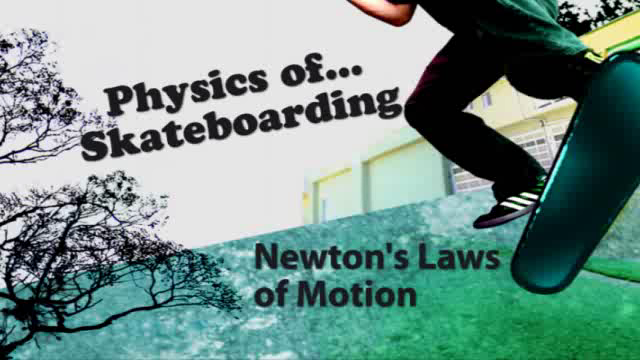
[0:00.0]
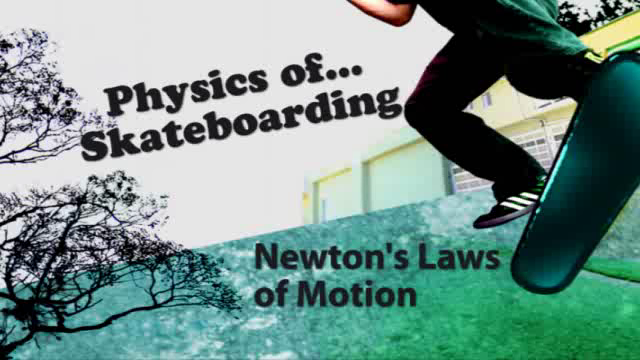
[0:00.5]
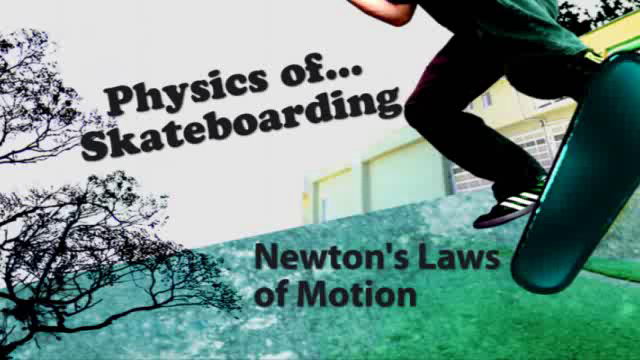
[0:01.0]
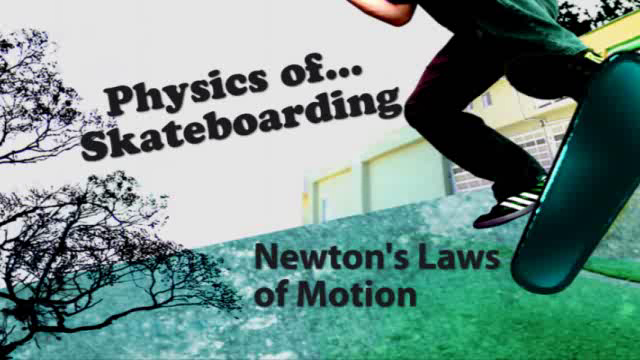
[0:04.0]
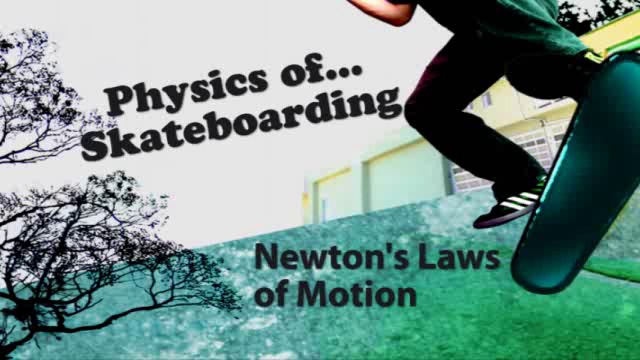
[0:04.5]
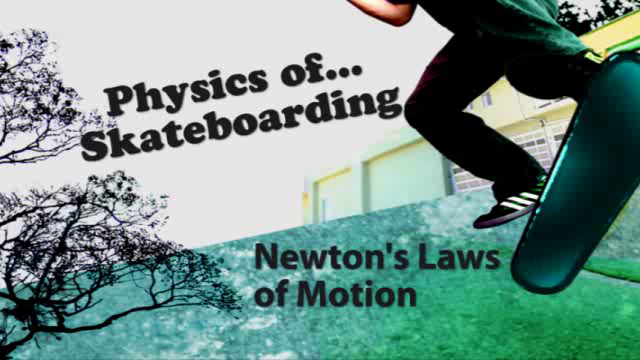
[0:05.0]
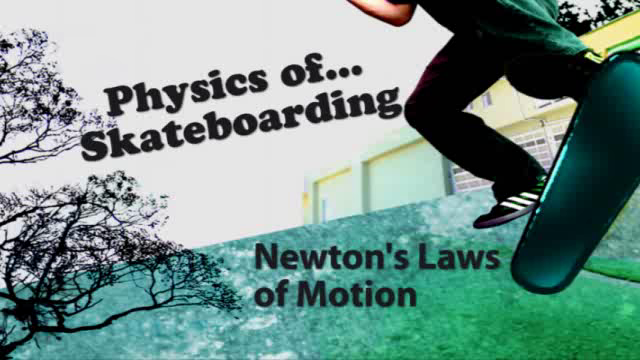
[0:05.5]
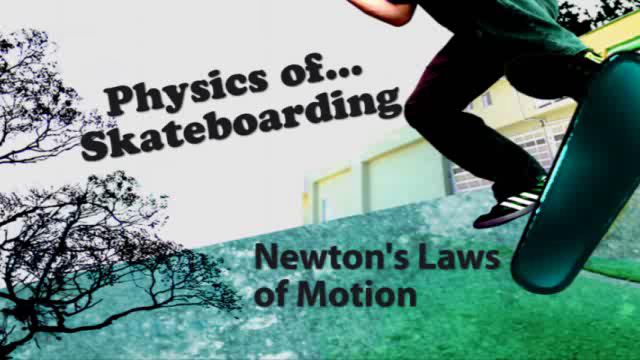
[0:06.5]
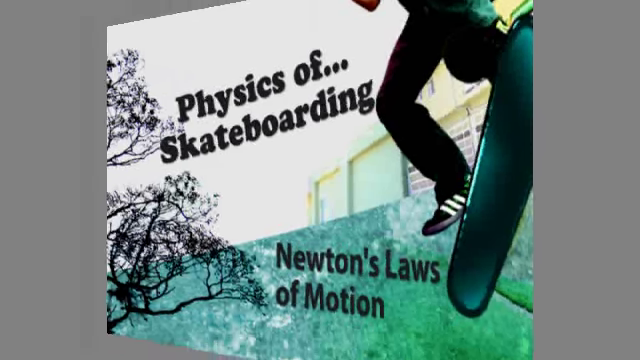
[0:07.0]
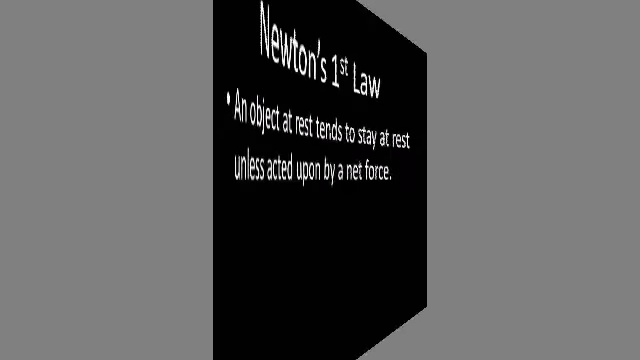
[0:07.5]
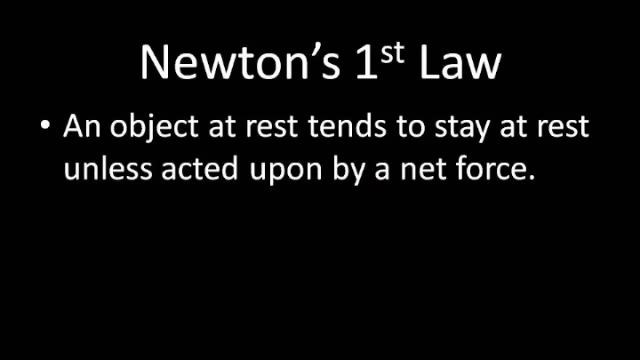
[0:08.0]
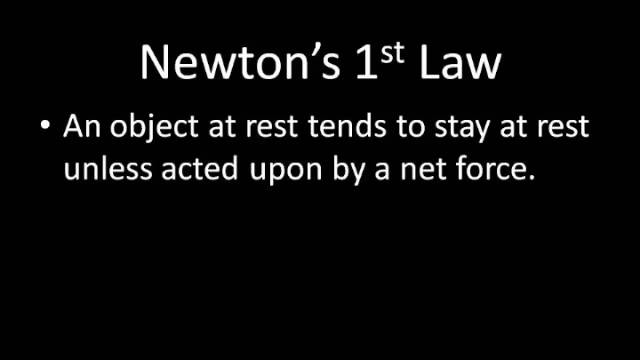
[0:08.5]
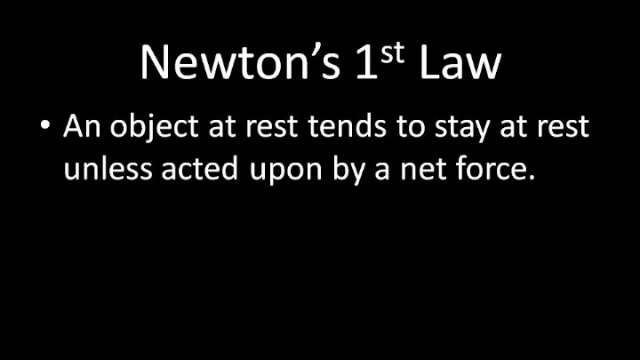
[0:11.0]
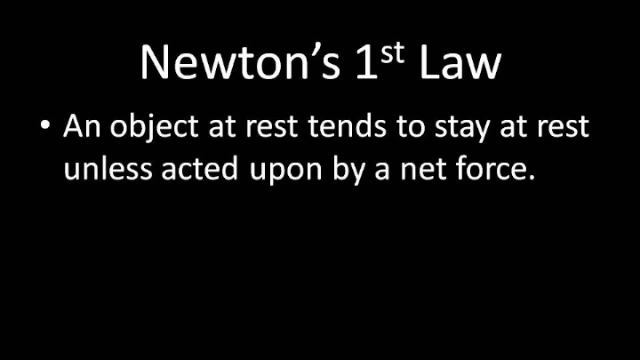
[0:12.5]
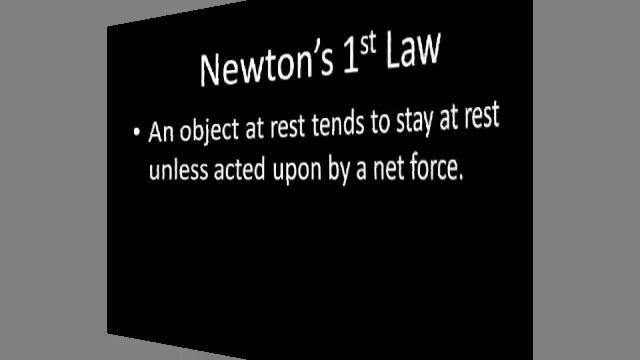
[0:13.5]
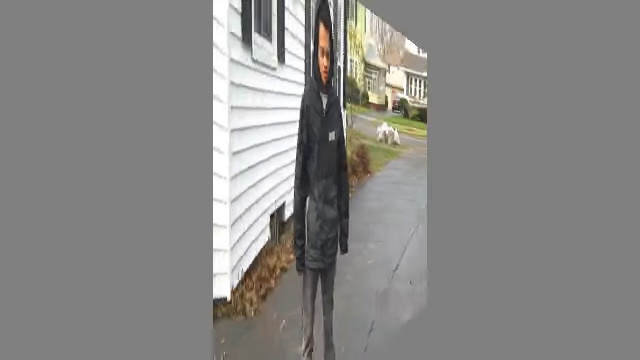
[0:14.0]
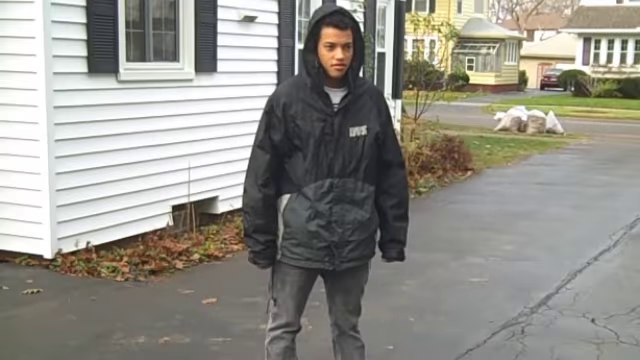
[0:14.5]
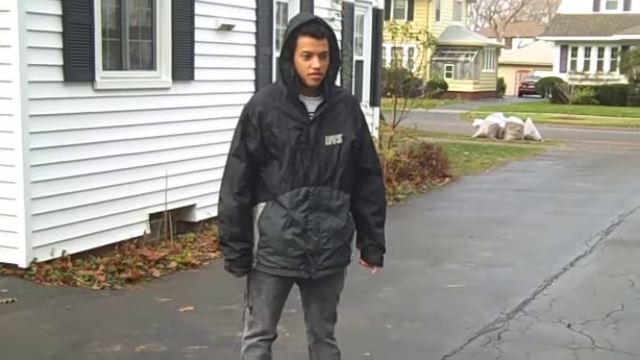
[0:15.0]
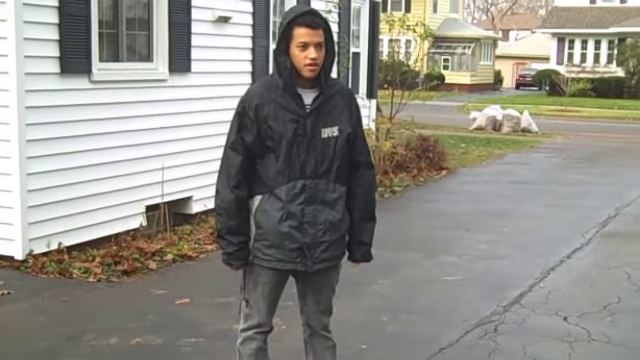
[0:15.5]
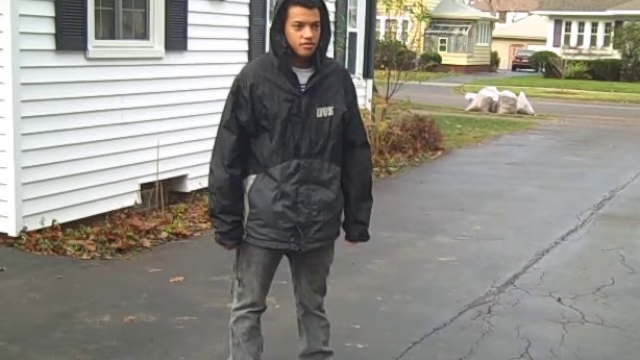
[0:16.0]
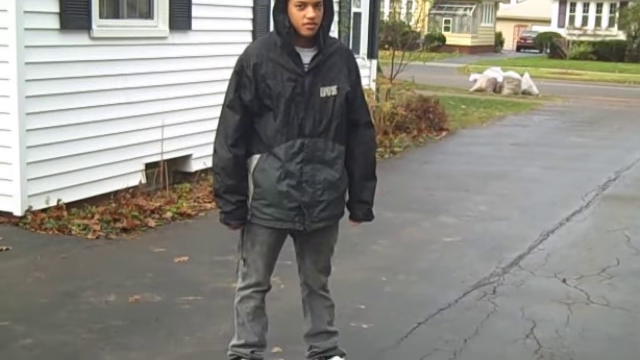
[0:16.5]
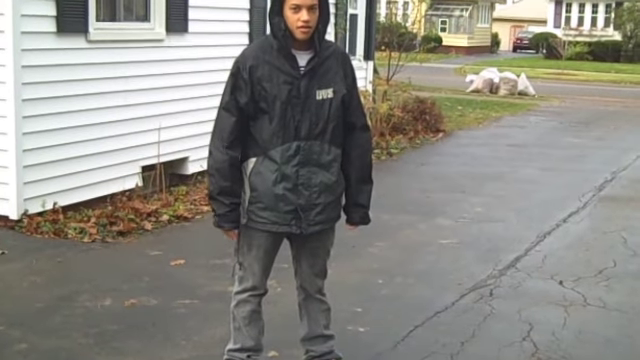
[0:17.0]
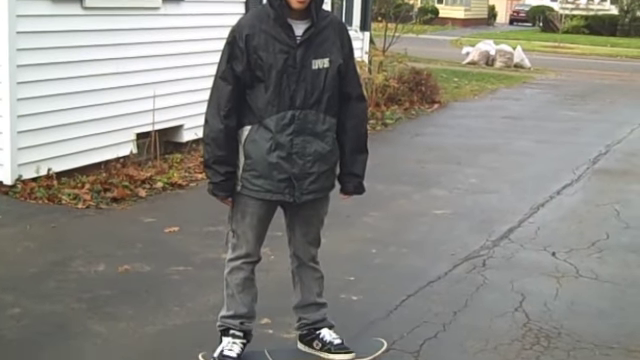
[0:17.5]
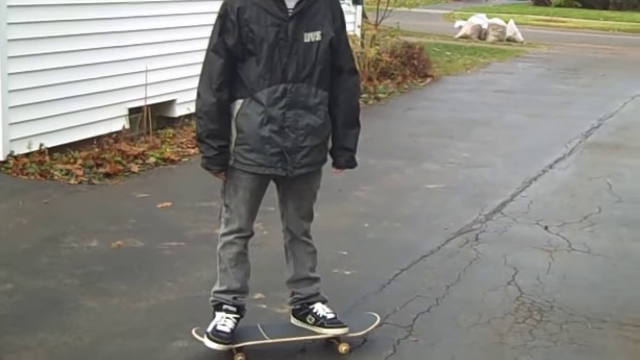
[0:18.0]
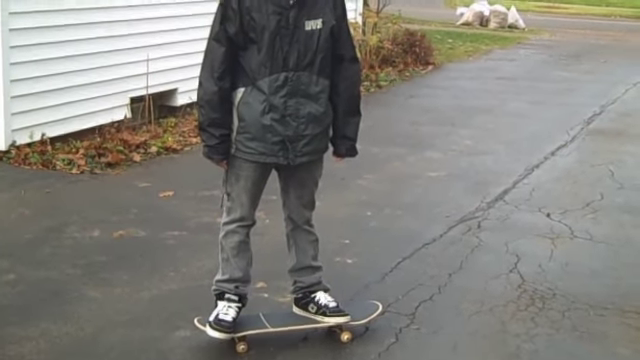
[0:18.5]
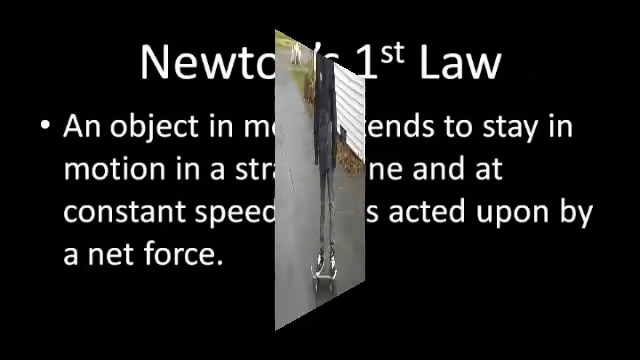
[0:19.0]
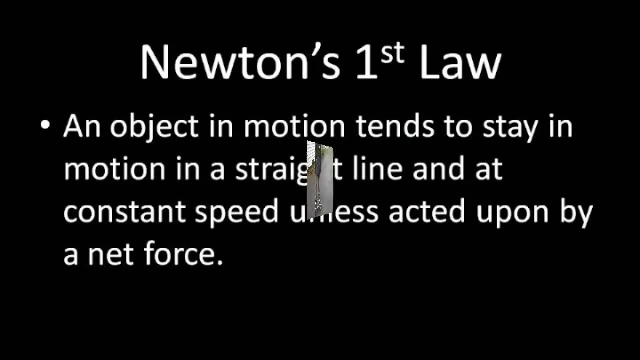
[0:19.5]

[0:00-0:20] The video opens on a blurry, animated-looking image of a guy who is partly out of view. He wears Adidas shoes, his right foot is forward and his left foot back, and he looks like he is doing some kind of flip. The skateboard is a darker teal, and a bit of his arm, part of his elbow, is visible. Behind him is a yellow house with a double garage, and to the left are two stacks of trees or branches that look like black silhouettes. Underneath, text reads "Newton's Laws of Motion." The scene changes to a black screen with Newton's first law in the center and a bullet point in white text: "an object that rests tends to stay at rest unless acted upon by a net force." The slide rotates away, and a light-skinned black boy appears standing in a driveway with a white house behind him, legs out a little and arms out to the side. He wears a black hooded rain jacket, so it seems a little cold. He looks like he is speaking a little, moving his left arm slightly forward. He wears black jeans and black shoes with white shoestrings, almost like canvases, and he stands on a black skateboard. The video then gets smaller, flips a couple of times out of view, and returns to the black screen with Newton's first law.